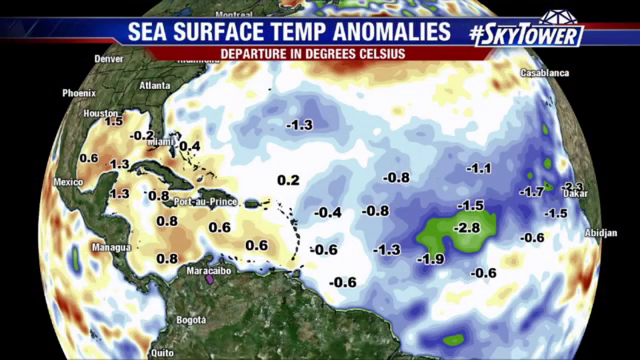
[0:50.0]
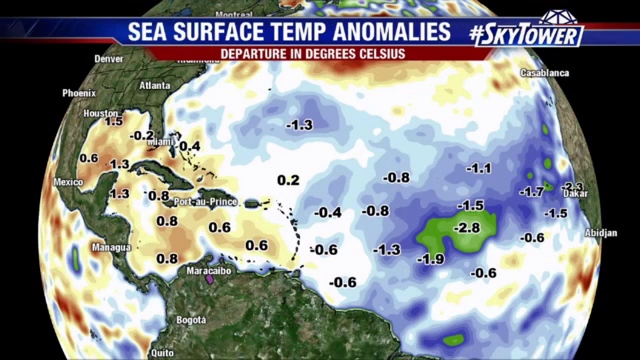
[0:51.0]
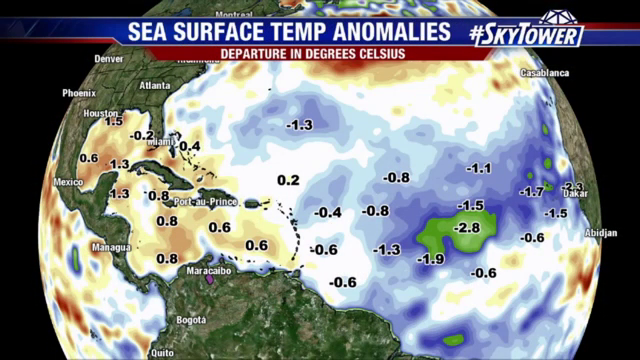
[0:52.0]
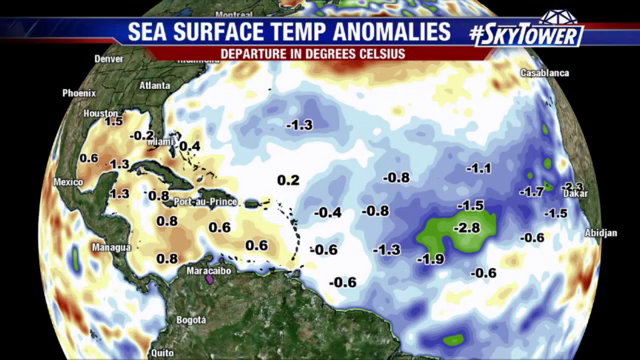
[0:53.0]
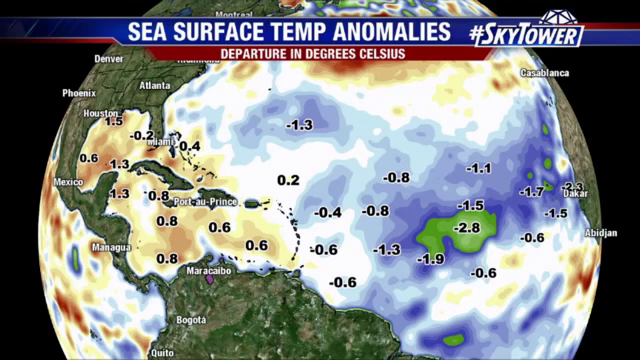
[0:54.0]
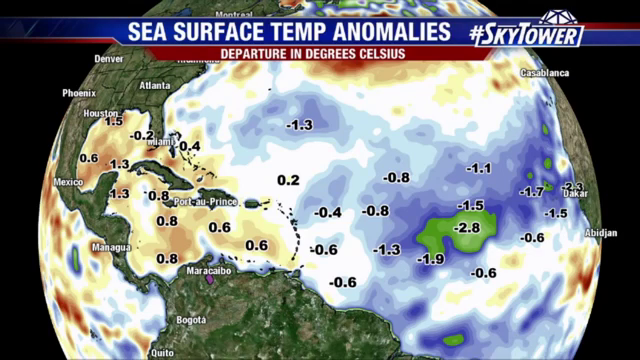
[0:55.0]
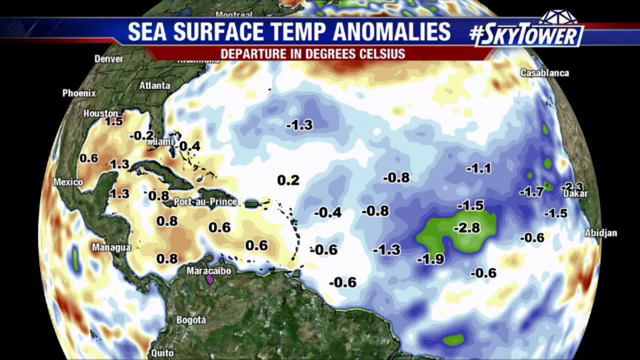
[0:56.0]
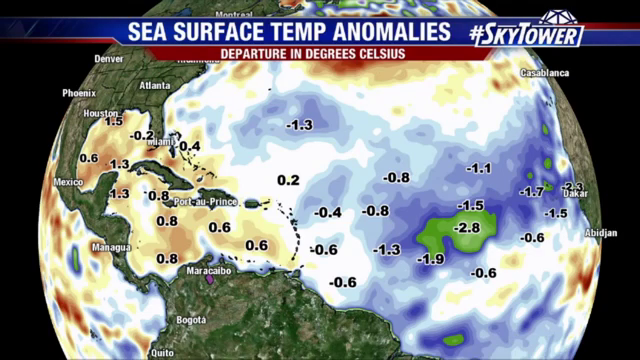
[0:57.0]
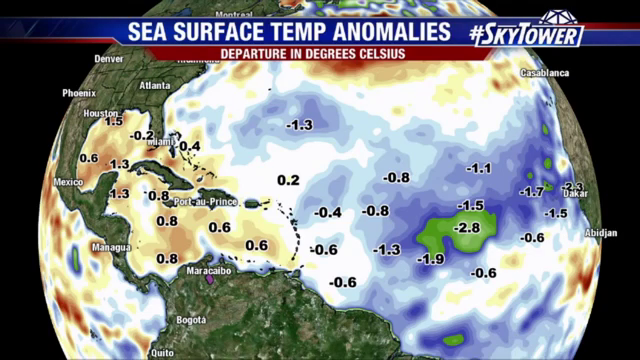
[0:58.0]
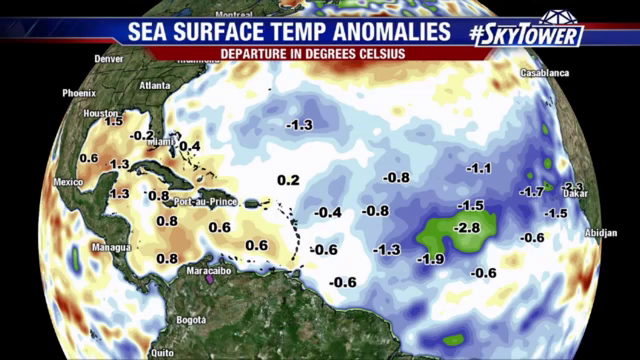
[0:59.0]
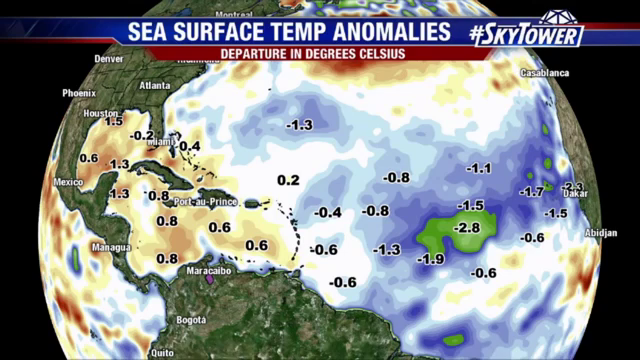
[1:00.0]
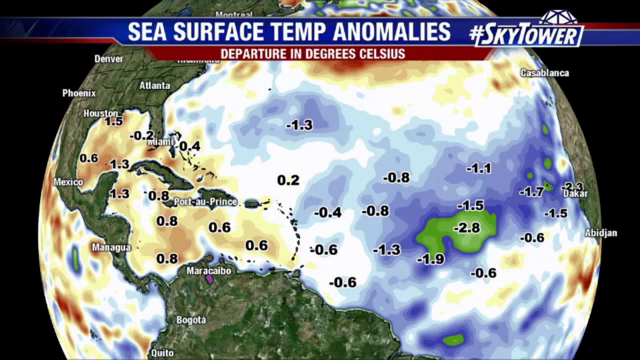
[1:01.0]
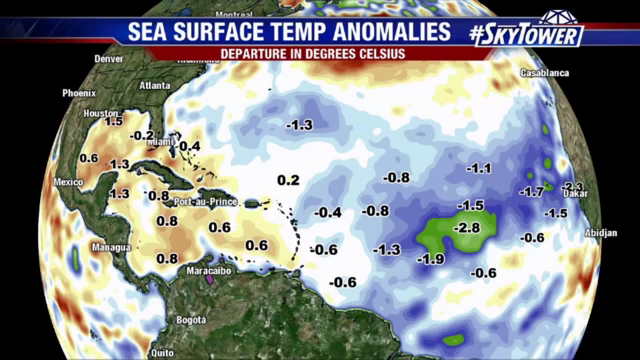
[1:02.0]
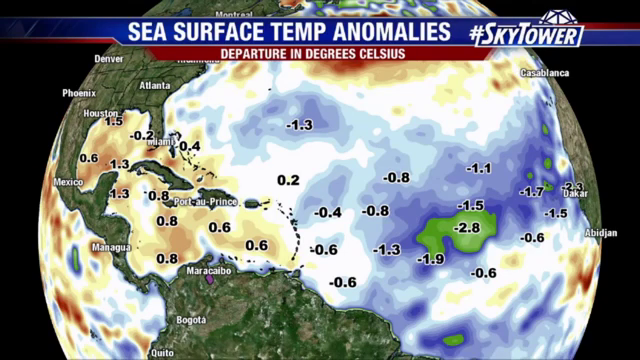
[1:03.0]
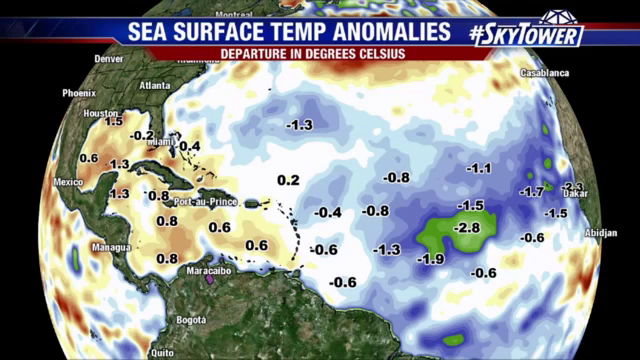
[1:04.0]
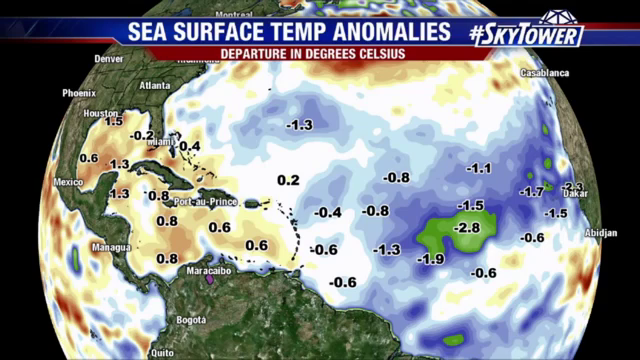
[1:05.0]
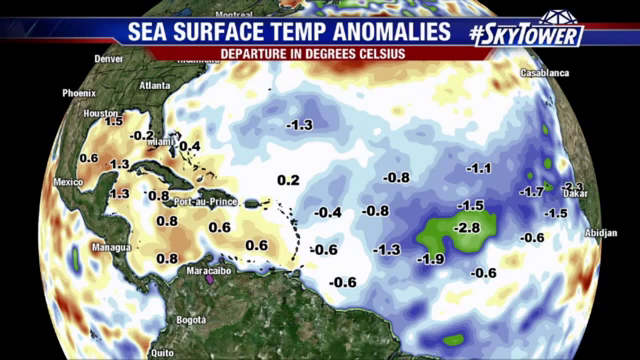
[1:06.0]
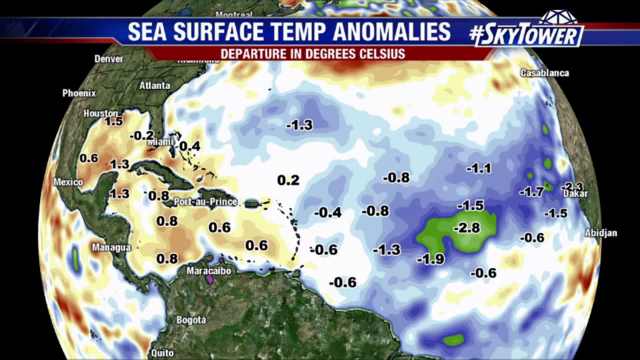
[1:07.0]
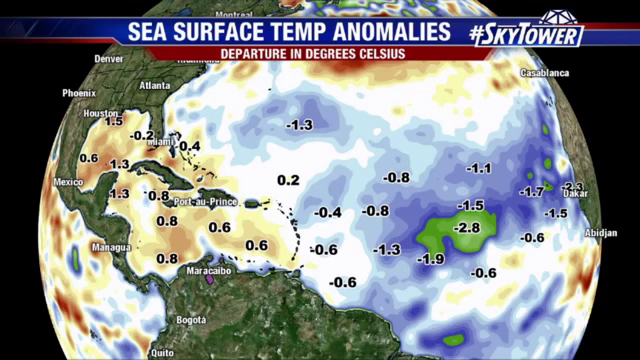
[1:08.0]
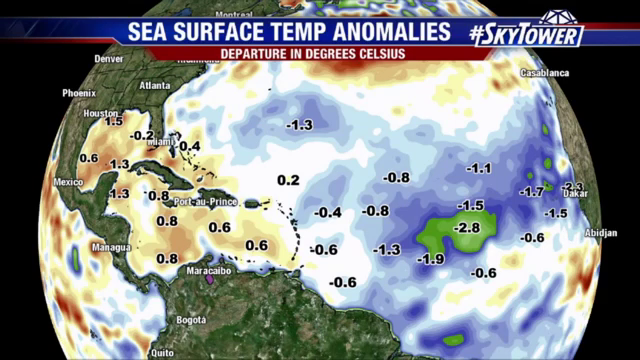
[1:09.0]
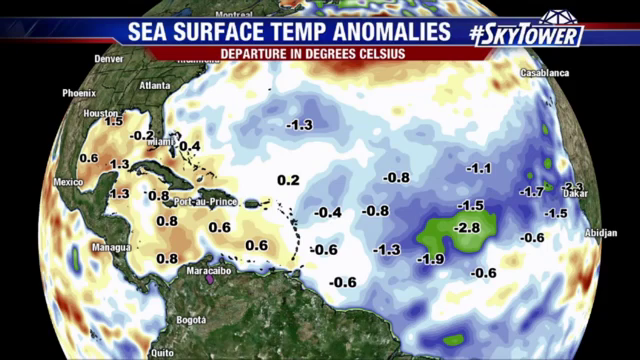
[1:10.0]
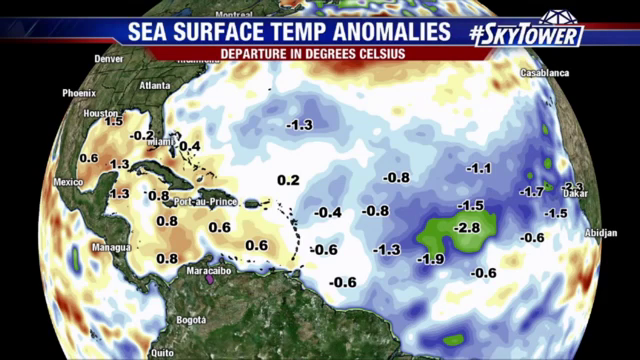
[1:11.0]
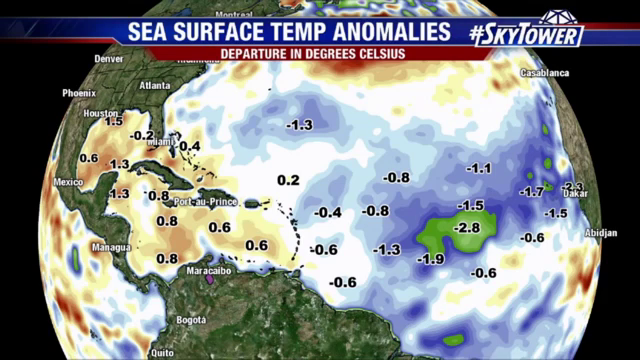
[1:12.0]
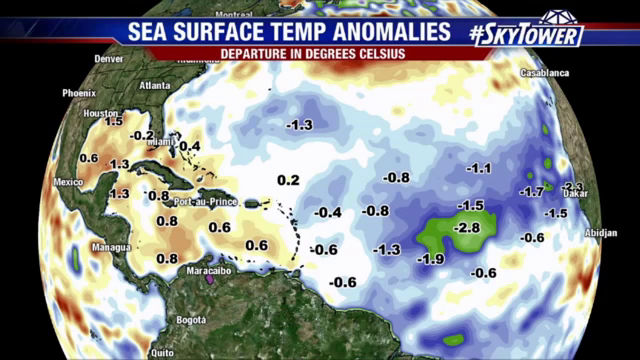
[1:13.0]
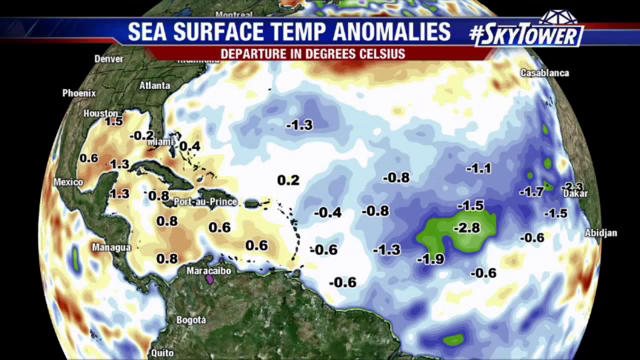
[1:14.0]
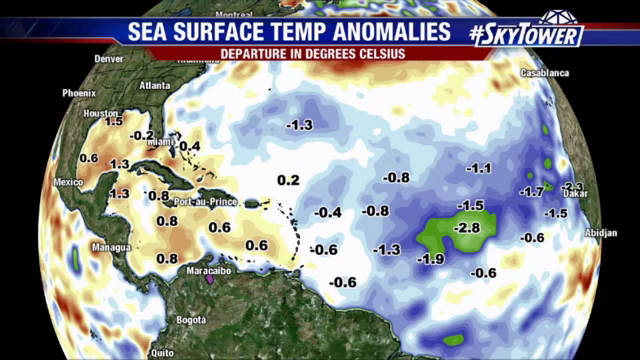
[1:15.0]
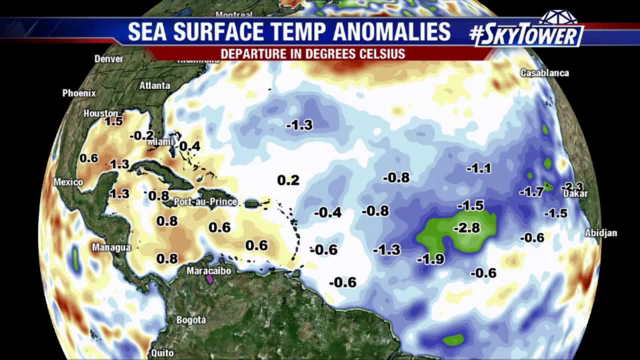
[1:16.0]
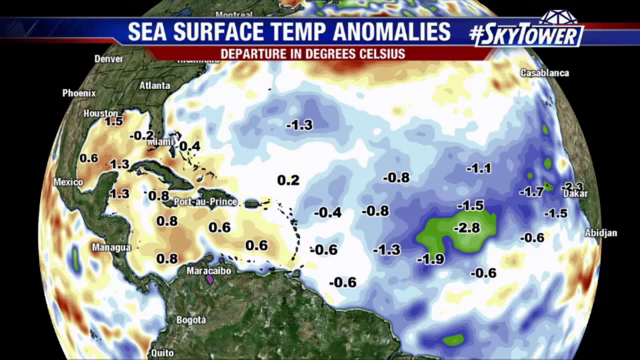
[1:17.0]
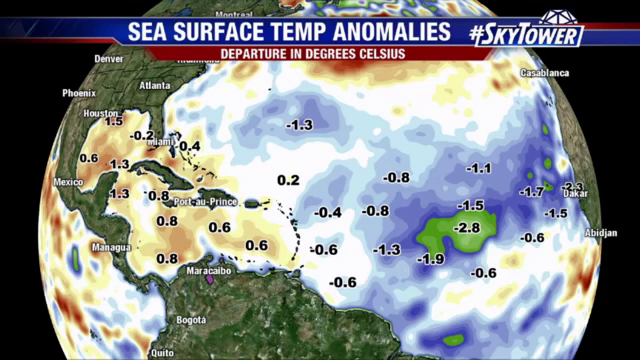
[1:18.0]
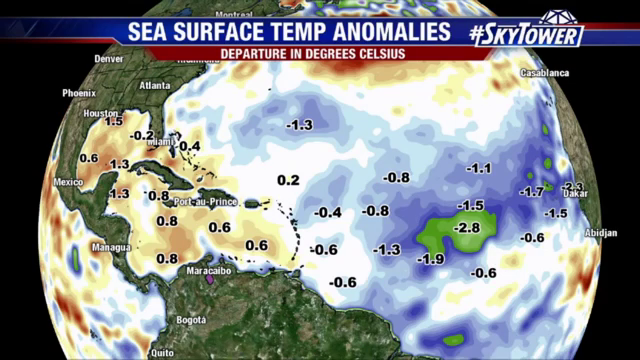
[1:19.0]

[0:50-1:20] The sea surface temp anomalies globe is shown with its different colors. Land is in green, with Phoenix, Denver and Atlanta labeled, and around it the sea surface is shown in blue, white and yellow, with temperatures marked such as -1.9, -0.6 and -0.8. Some yellow spots have a little red in them, and in the middle of a blue spot is a green spot marked -2.8. There is a lot of yellow, where the numbers are positive, such as 0.8 and 0.6; the darker blue areas have negative numbers such as -1.5 and -1.1, and the green numbers are more negative, at -2.8.